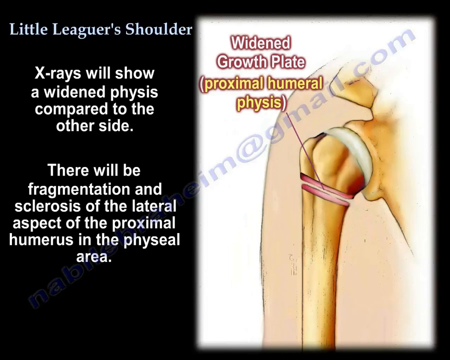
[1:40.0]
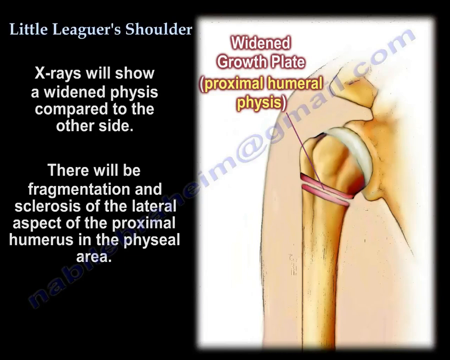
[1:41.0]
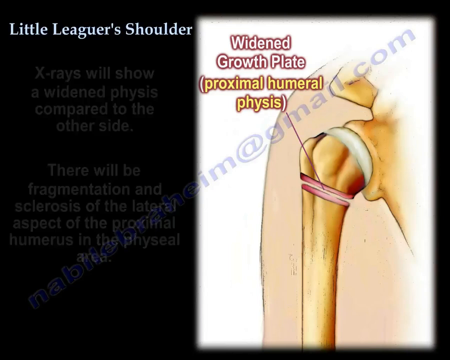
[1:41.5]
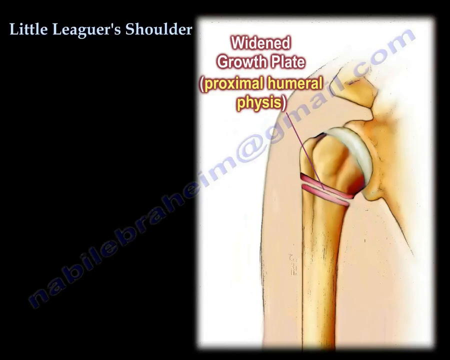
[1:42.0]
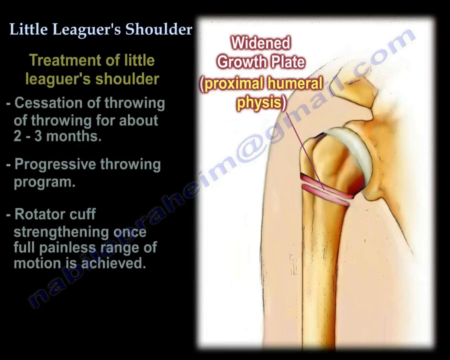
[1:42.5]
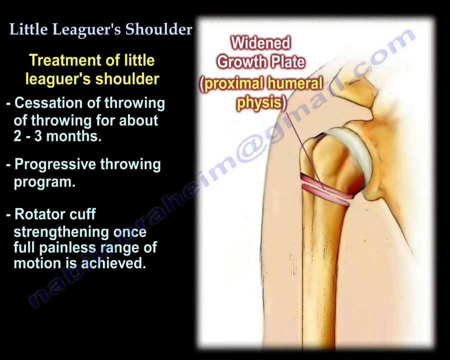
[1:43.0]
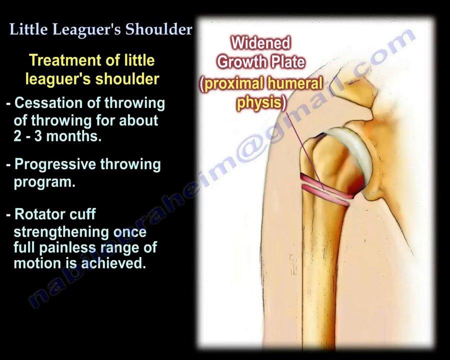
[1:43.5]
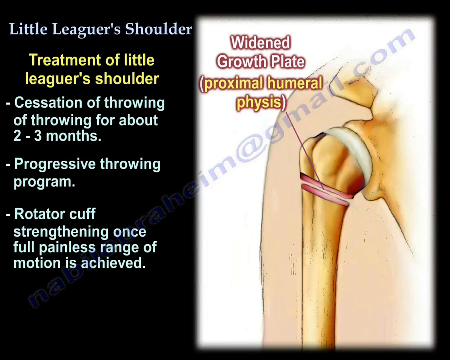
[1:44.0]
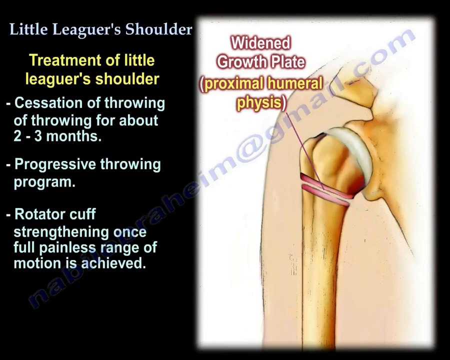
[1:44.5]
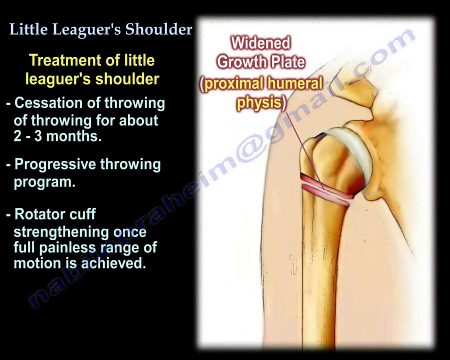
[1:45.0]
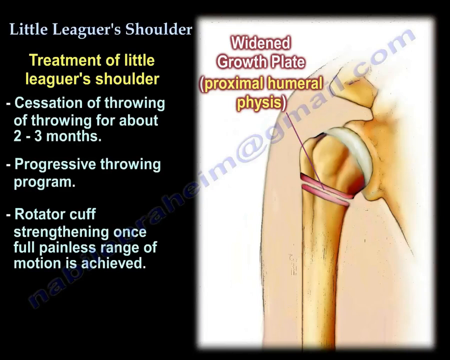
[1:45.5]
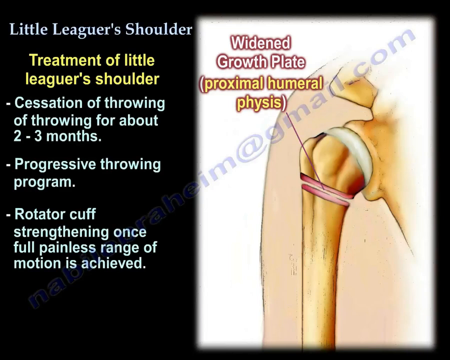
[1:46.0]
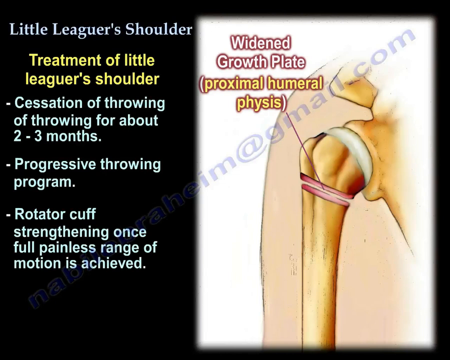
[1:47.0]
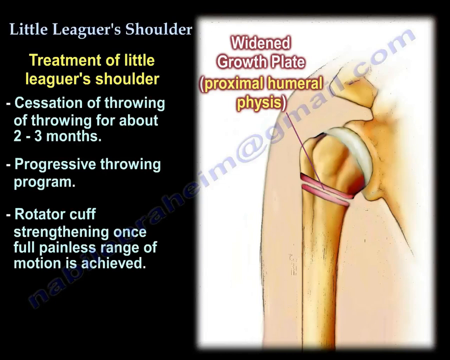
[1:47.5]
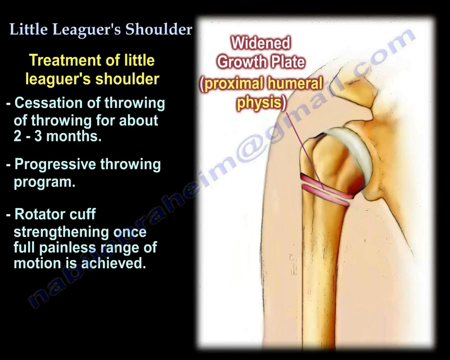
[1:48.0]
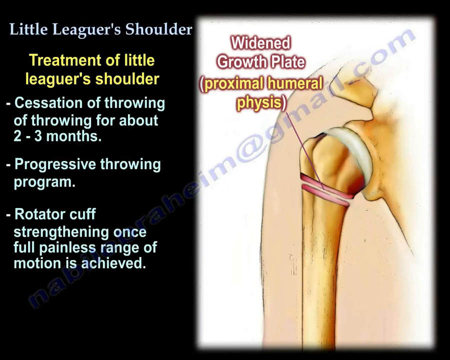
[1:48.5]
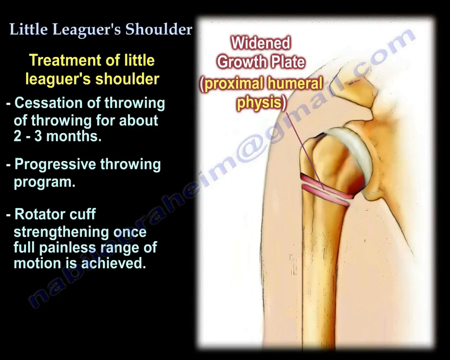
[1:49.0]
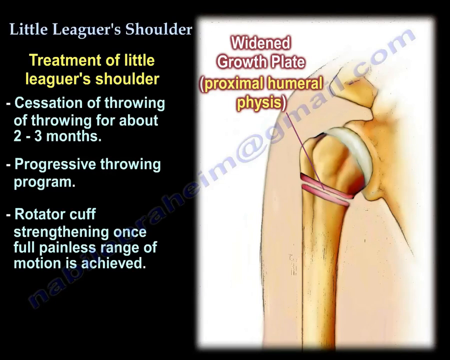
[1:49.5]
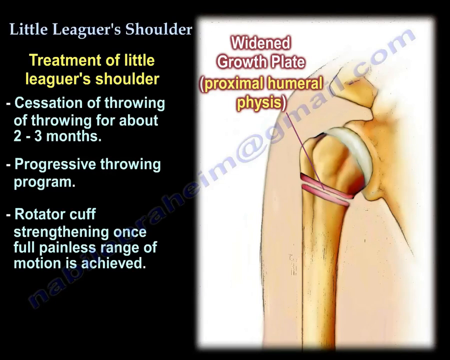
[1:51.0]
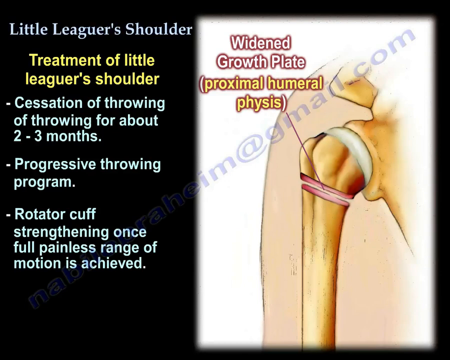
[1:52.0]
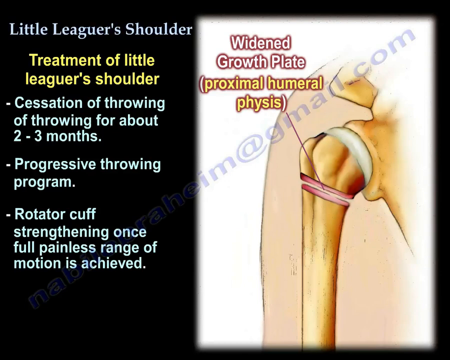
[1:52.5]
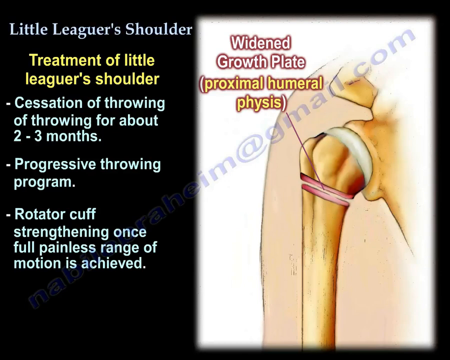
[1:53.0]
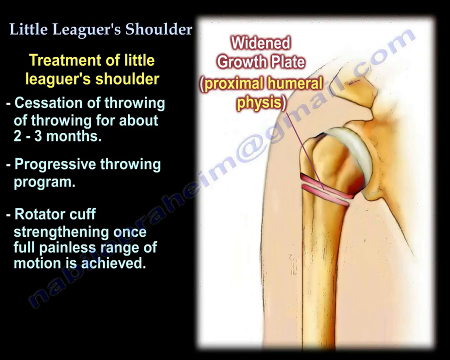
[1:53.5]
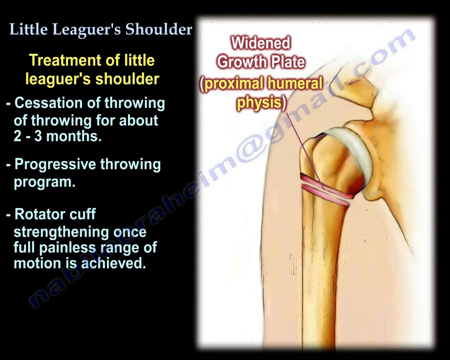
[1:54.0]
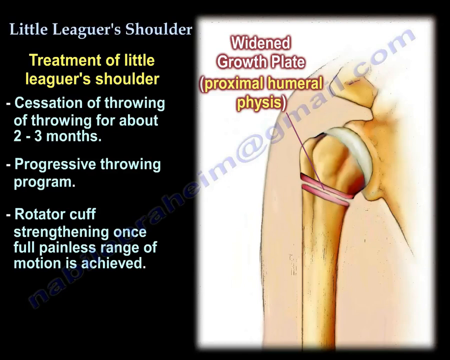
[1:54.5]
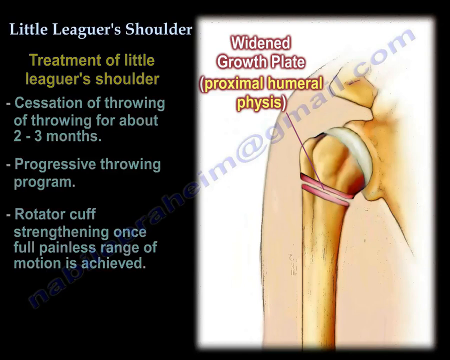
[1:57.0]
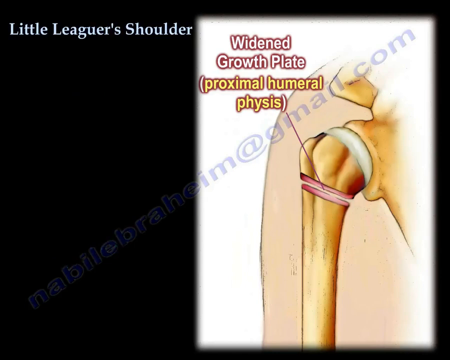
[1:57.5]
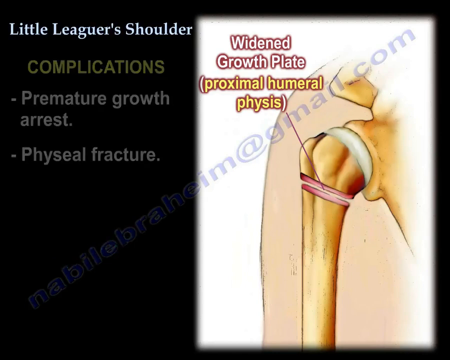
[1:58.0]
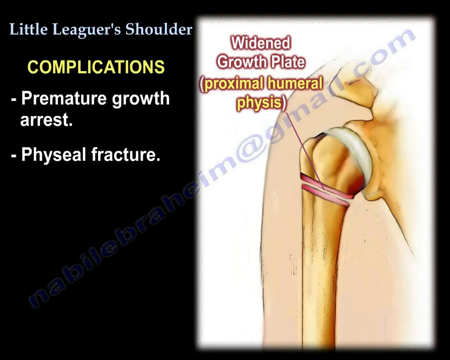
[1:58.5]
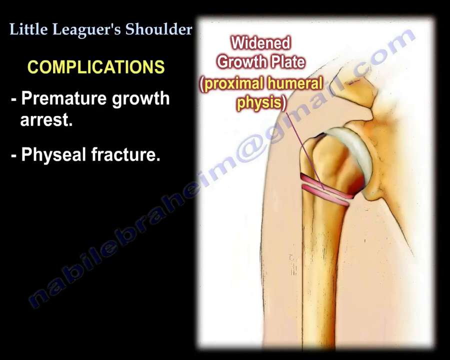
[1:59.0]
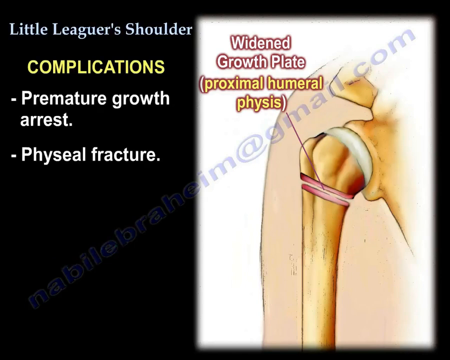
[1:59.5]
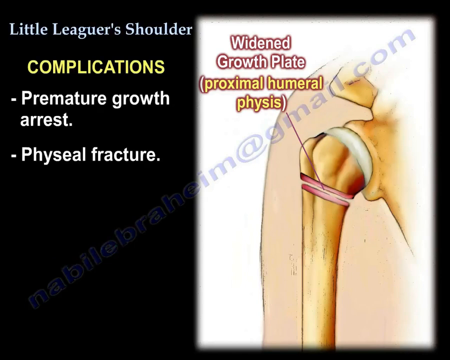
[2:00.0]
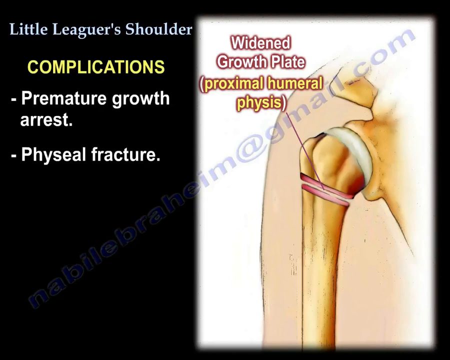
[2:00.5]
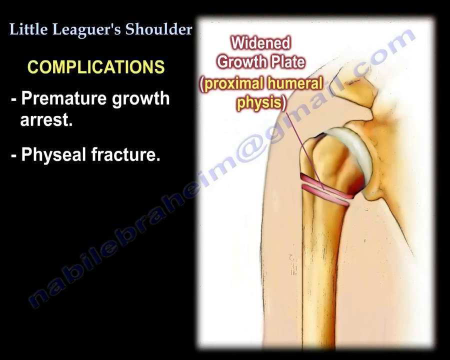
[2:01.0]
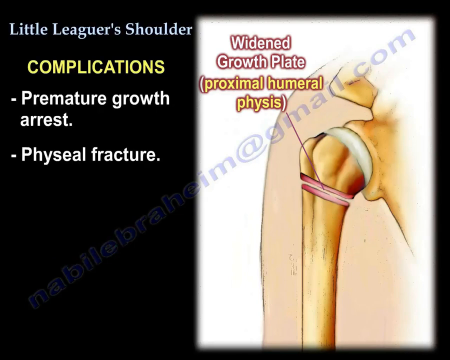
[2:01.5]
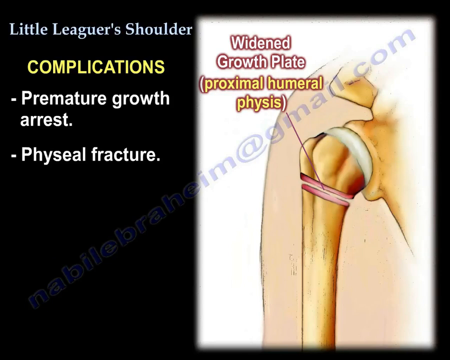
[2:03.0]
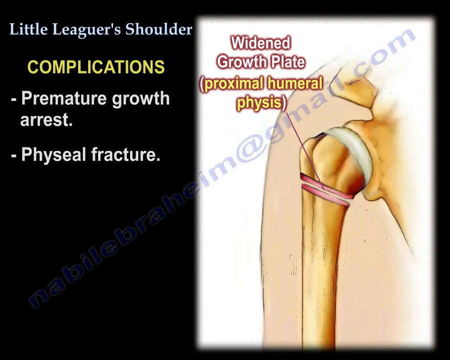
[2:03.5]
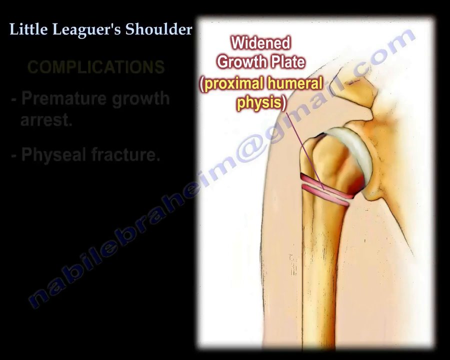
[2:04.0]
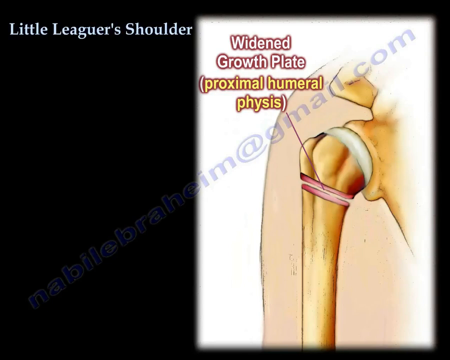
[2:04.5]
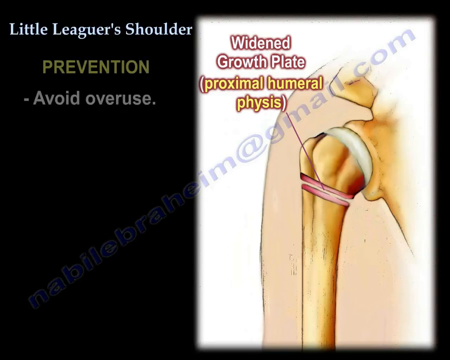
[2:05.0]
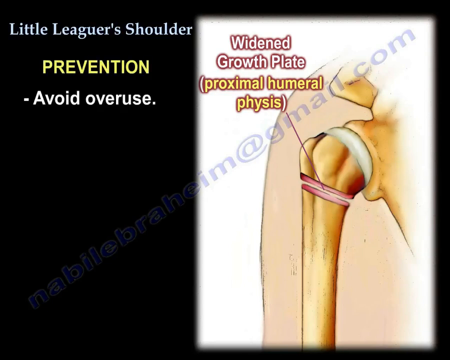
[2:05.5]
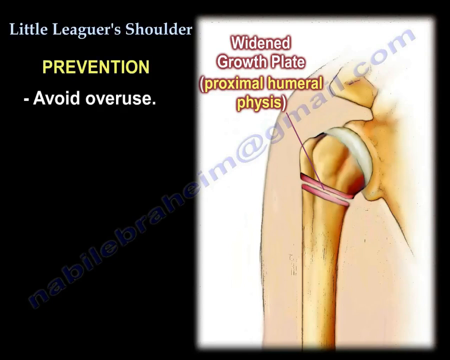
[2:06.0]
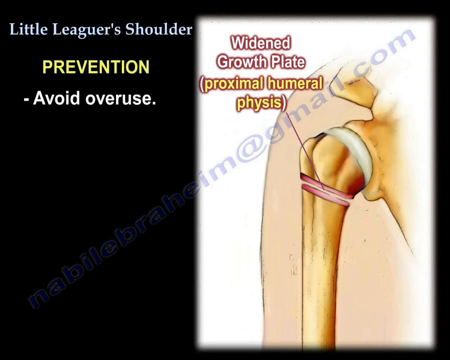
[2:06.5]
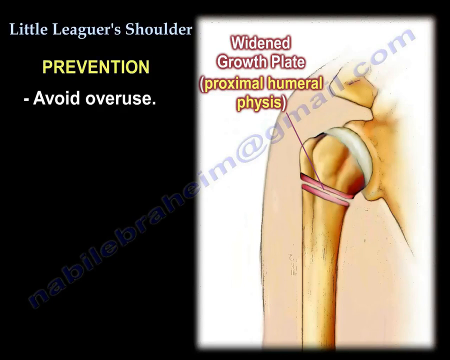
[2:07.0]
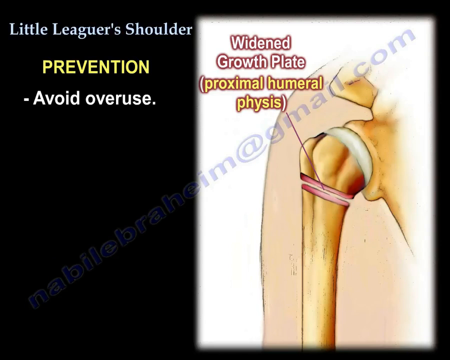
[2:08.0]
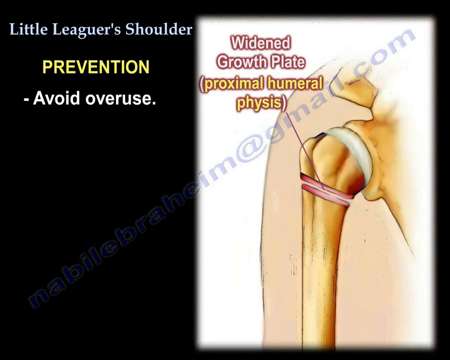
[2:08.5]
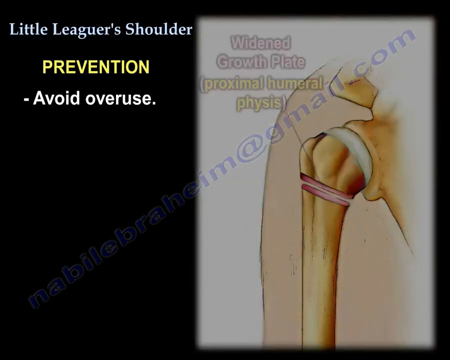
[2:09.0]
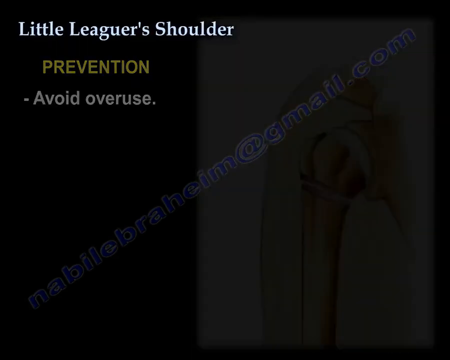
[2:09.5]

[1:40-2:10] On the right-hand side of the screen is a close-up diagram of a shoulder socket, with a graphic that says "widened growth plate, proximal humeral physis" and an arrow pointing to this area. At the top left, in blue letters, is "little leaguer shoulder". Below that, in white letters against a black background, it reads "x-rays will show a widened physis compared to the other side. There will be fragmentation and sclerosis of the lateral aspect of the proximal humerus in the physio area." This cuts away, and yellow letters read "treatment of little leaguer's shoulder". Below that, in light green, are three bullet points: "cessation of throwing for about two to three months", "progressive throwing program", and "rotator cuff strengthening once full pain range of motion is achieved." This cuts away, and new wording on the screen says "complications" in all uppercase yellow letters, with "premature growth arrest and physeal fracture" below.